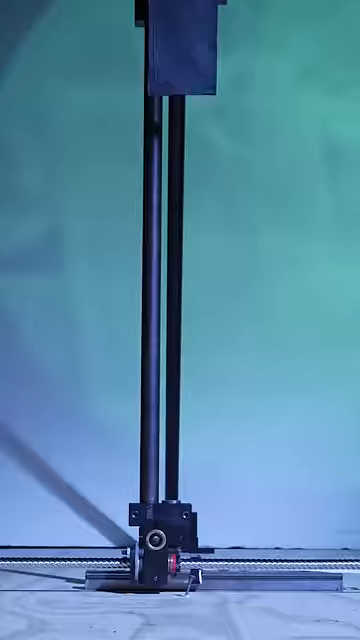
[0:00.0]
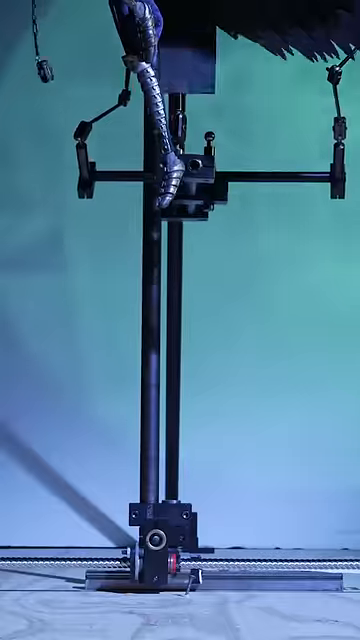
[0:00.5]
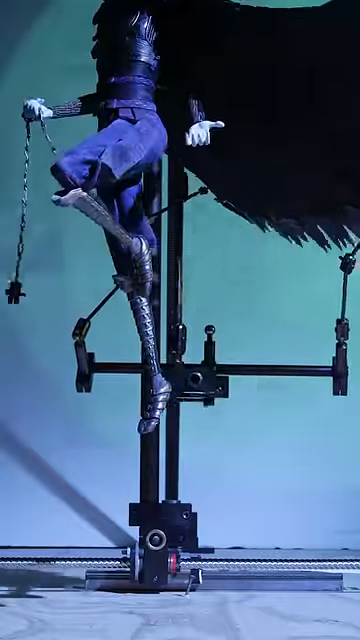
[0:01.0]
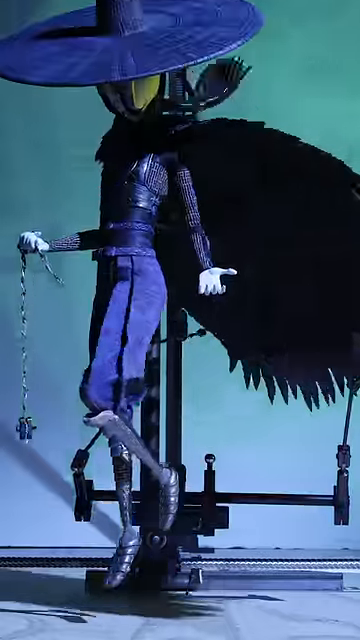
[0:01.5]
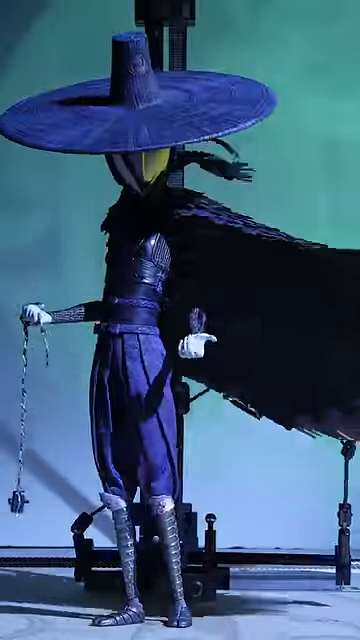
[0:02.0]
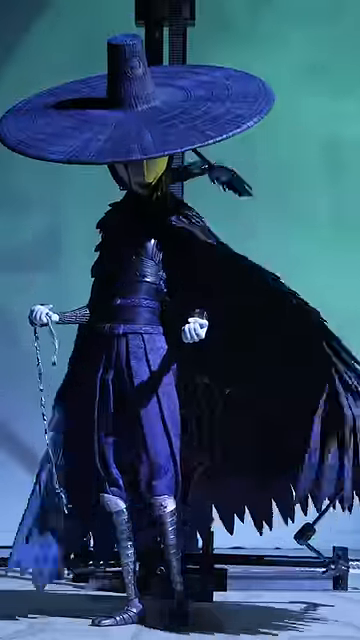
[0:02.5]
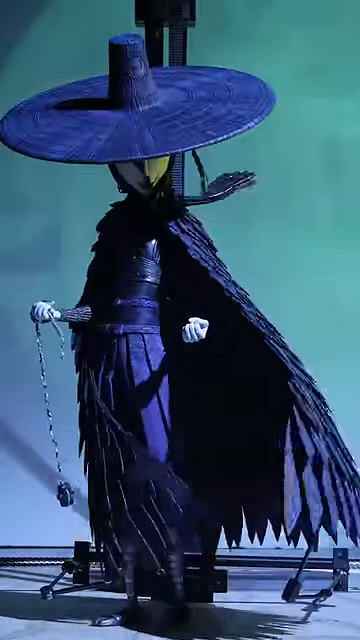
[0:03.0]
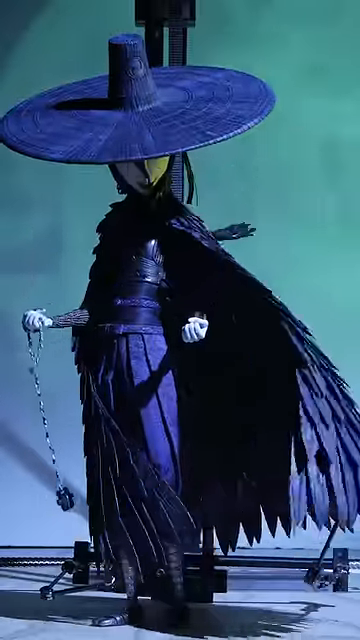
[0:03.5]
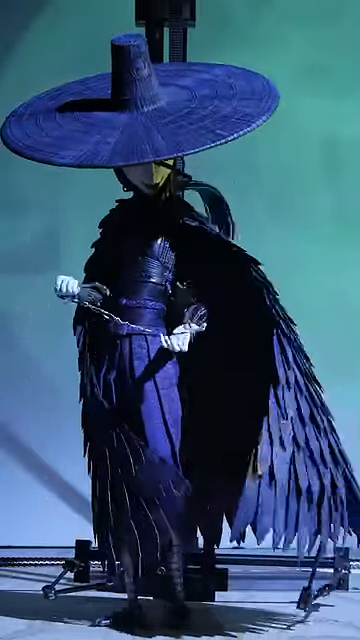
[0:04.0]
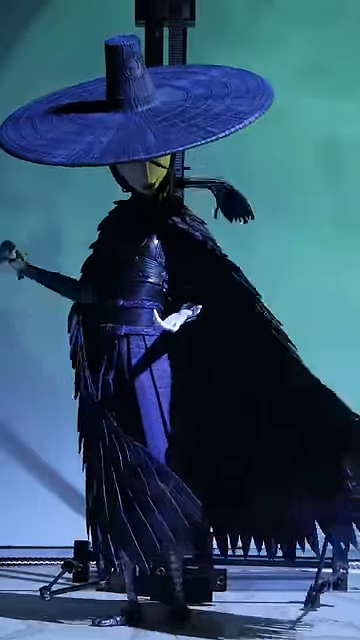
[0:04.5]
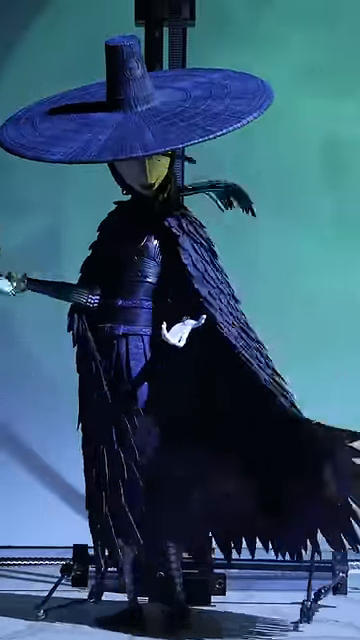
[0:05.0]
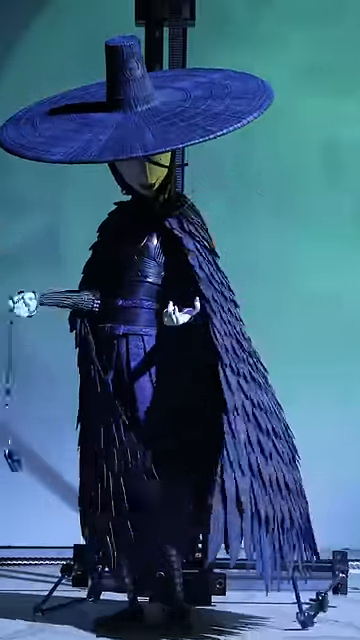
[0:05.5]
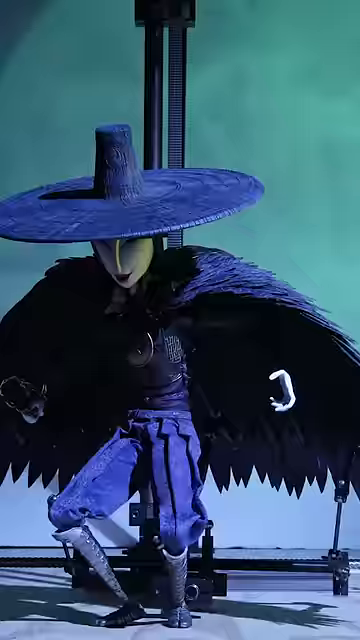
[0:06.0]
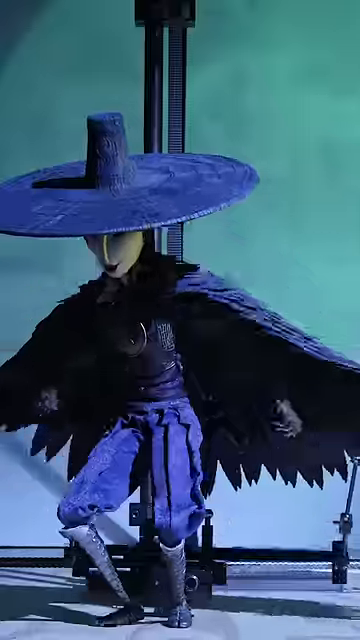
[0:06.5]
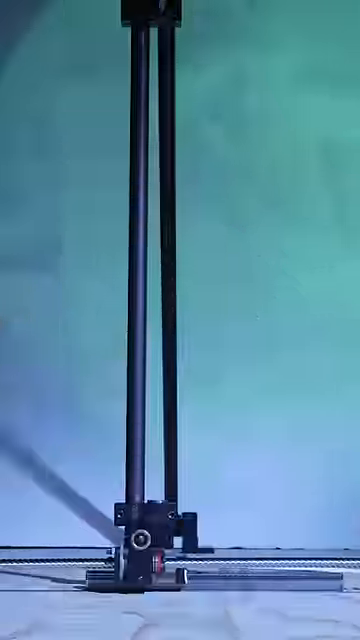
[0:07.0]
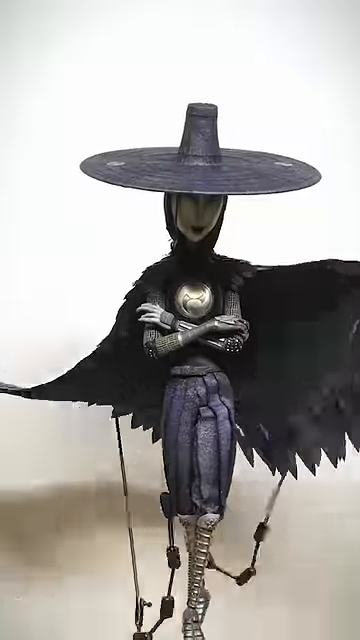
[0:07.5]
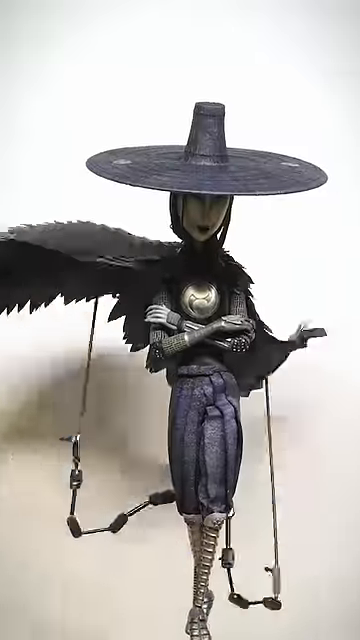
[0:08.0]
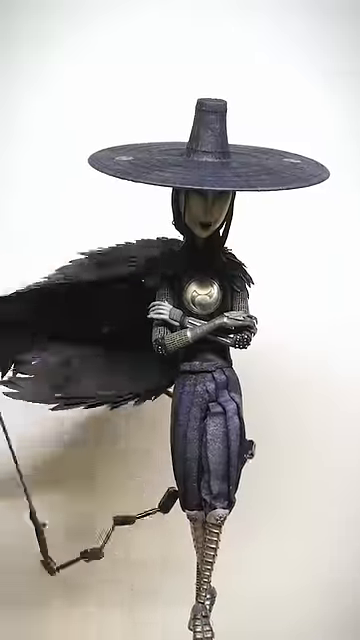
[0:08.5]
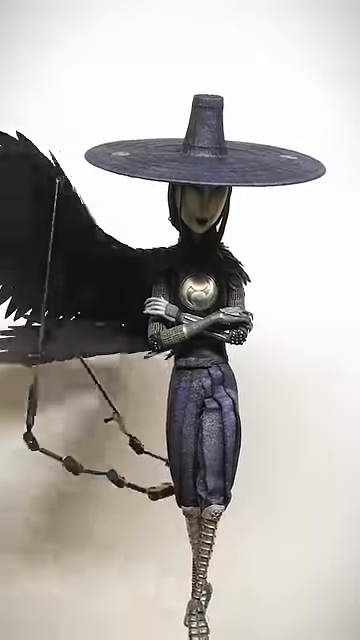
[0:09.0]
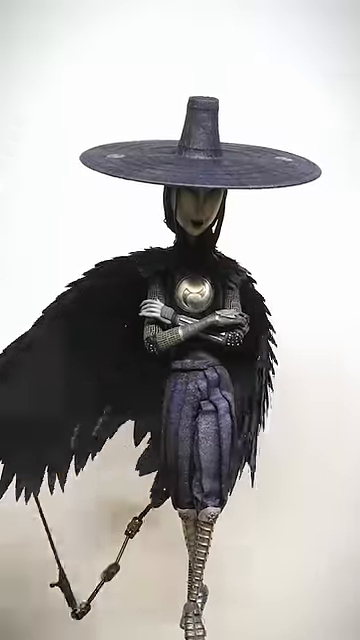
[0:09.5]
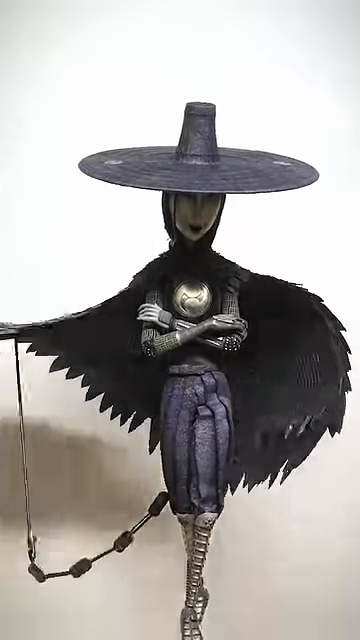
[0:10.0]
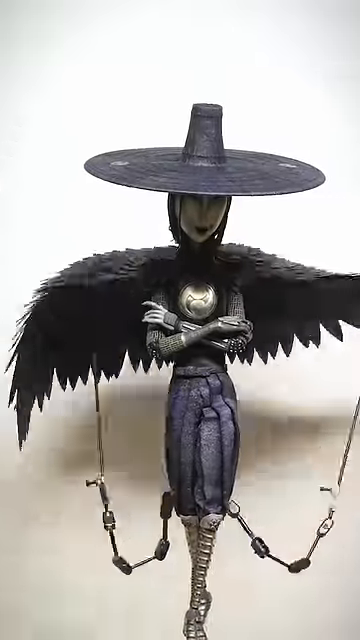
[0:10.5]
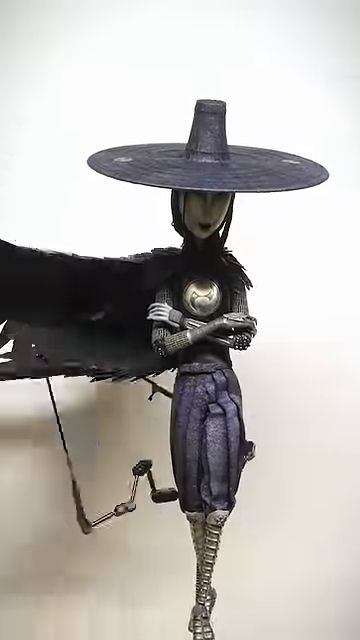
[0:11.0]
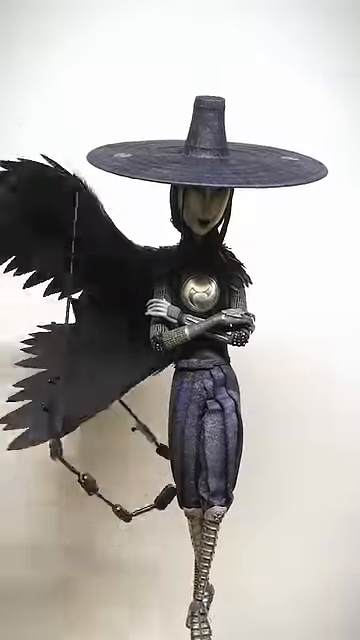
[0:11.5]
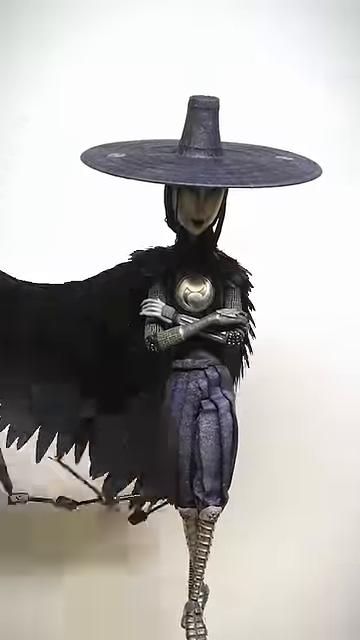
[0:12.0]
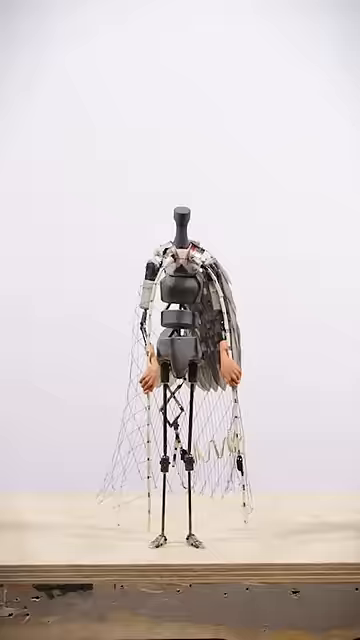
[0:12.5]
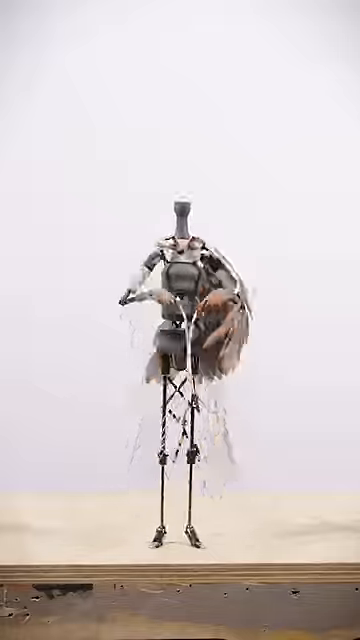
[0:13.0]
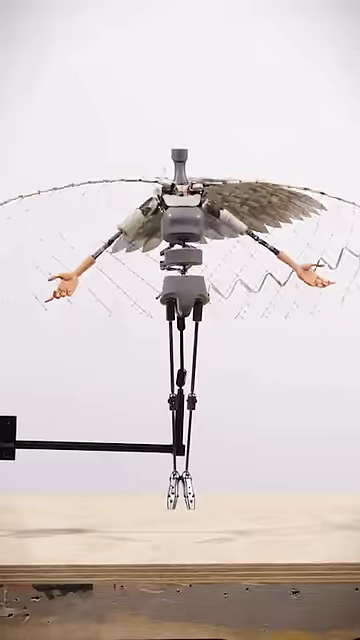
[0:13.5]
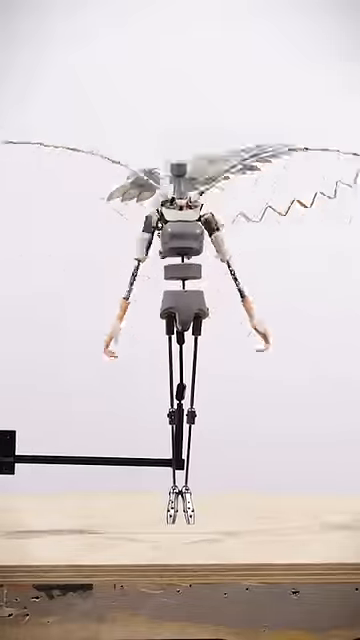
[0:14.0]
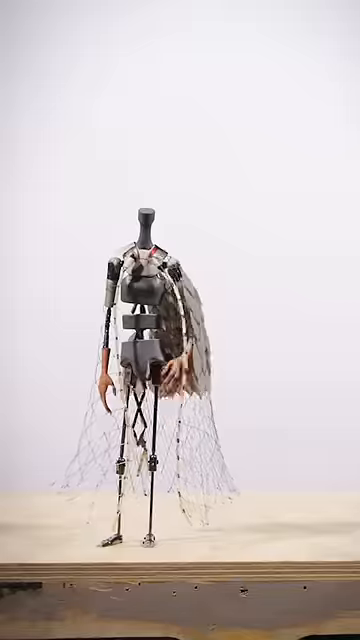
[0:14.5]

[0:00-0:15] In this animated video, a witch descends from some sort of motorized contraption. She appears to be a witch because the character wears an extremely wide-brimmed hat; the face looks like it possibly has green skin, and the clothing is a dark purple with some sort of feathery-looking cape. She holds something in her right hand, possibly a rope, and swings it around. She then quickly ascends back up, and the scene transitions to her seemingly suspended in mid-air, smiling while floating with her arms folded and the cape fluttering behind her. After that, it transitions to what is possibly a behind-the-scenes animation: a motorized body without a head, on some kind of similar motorized contraption.